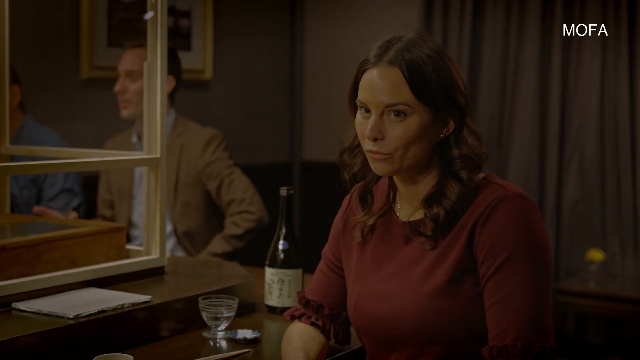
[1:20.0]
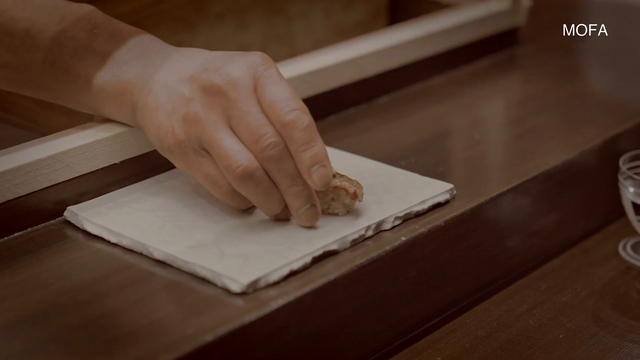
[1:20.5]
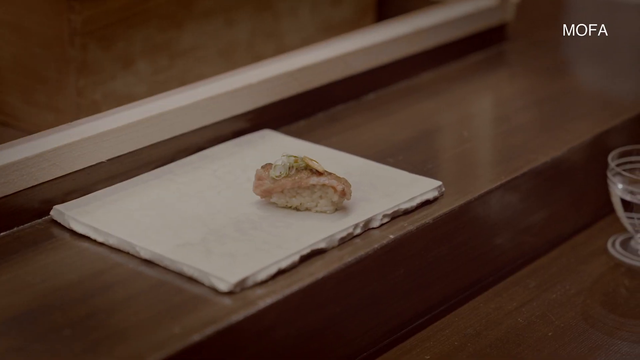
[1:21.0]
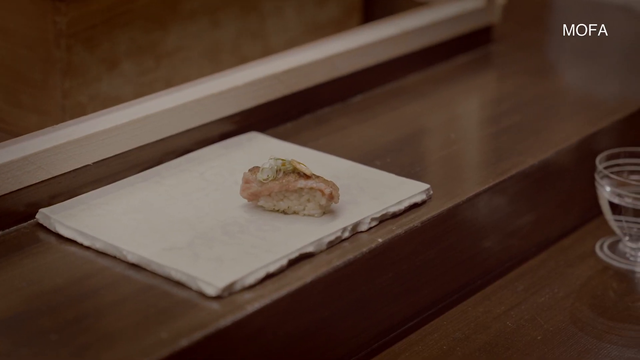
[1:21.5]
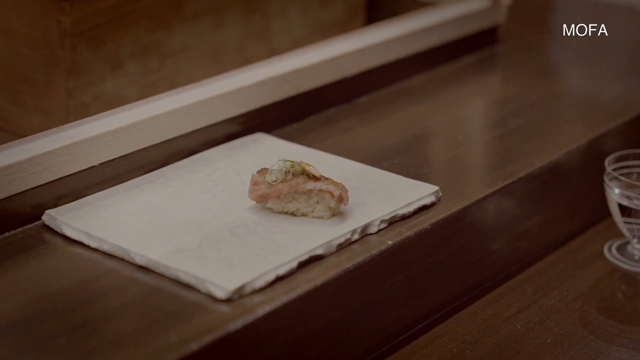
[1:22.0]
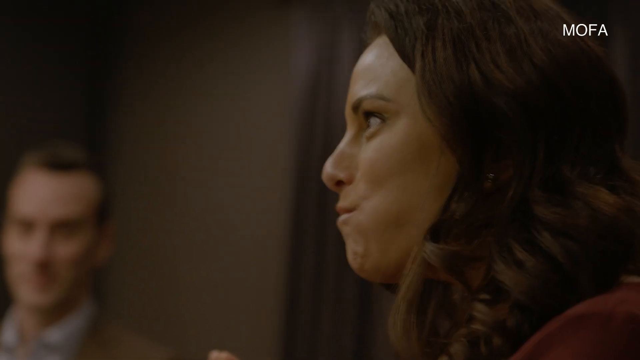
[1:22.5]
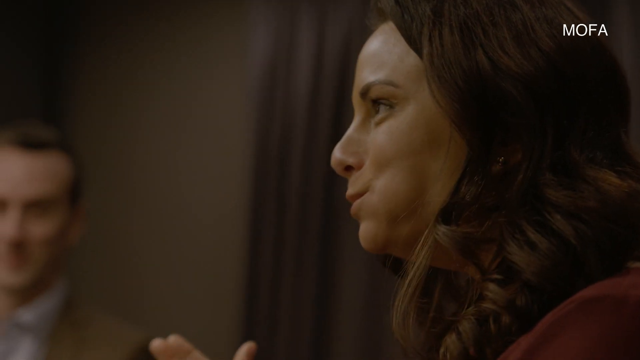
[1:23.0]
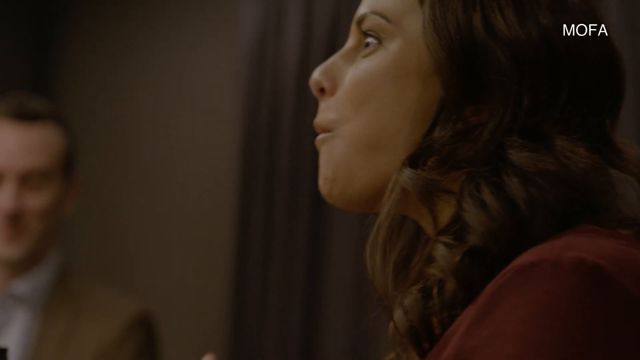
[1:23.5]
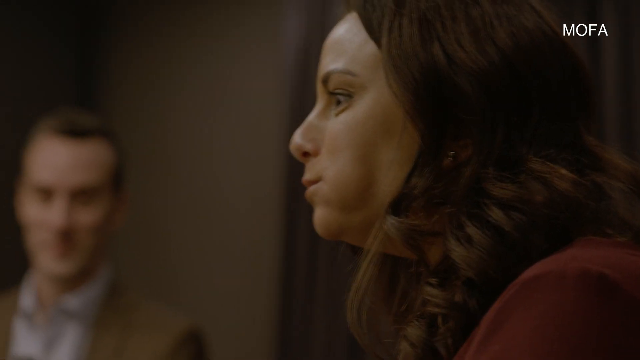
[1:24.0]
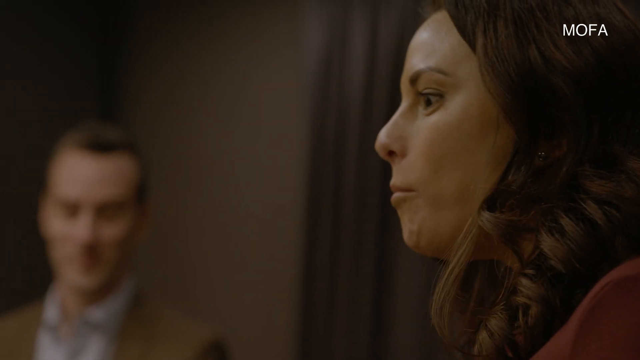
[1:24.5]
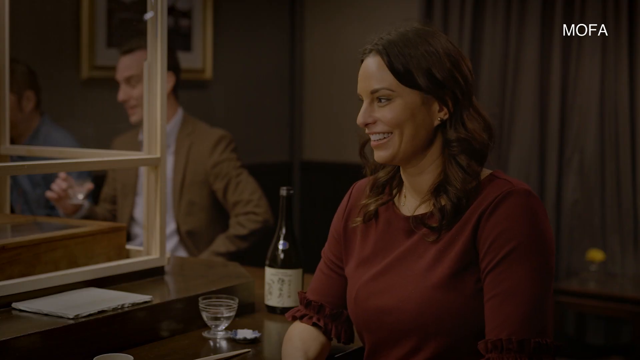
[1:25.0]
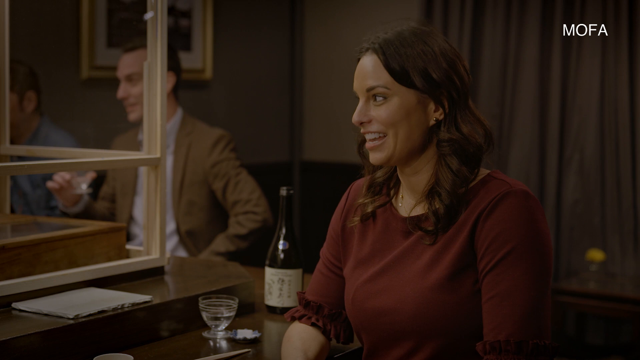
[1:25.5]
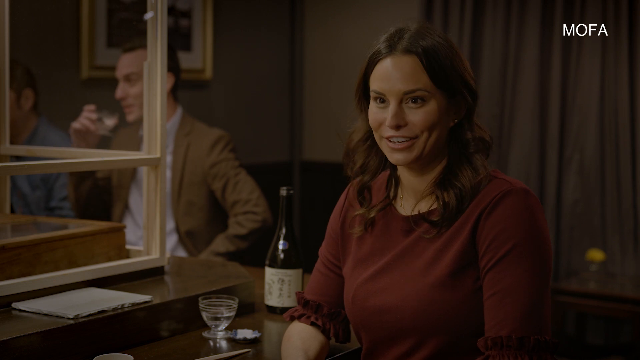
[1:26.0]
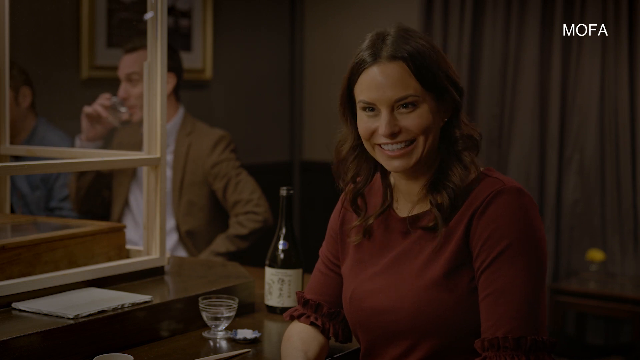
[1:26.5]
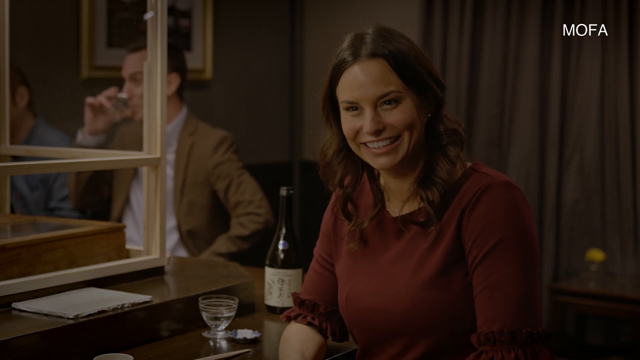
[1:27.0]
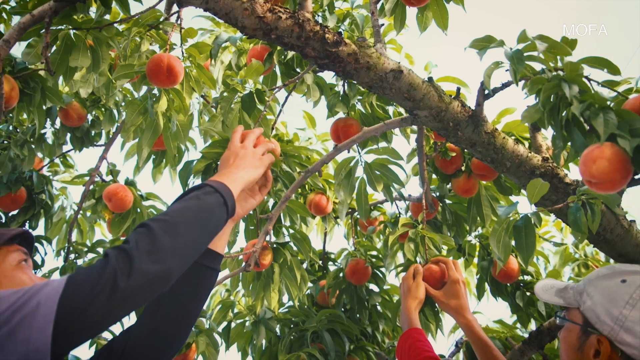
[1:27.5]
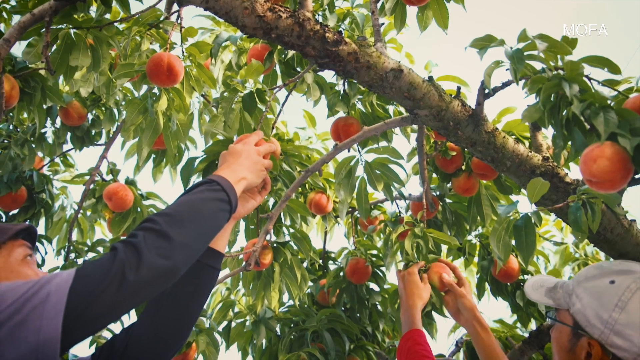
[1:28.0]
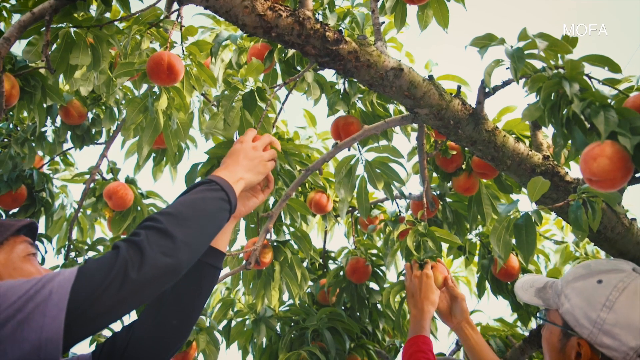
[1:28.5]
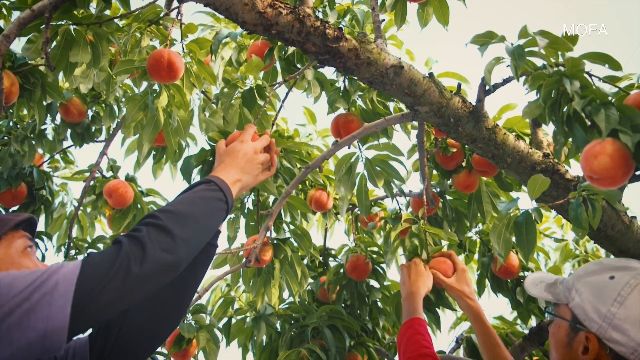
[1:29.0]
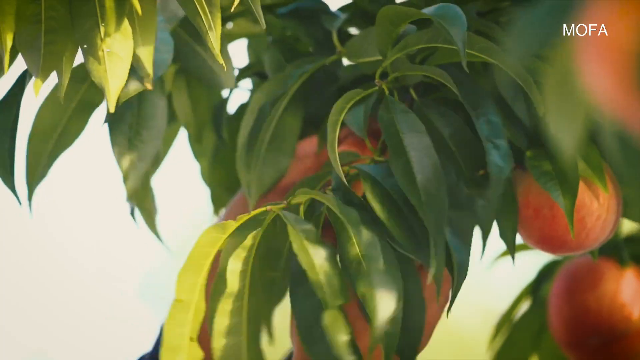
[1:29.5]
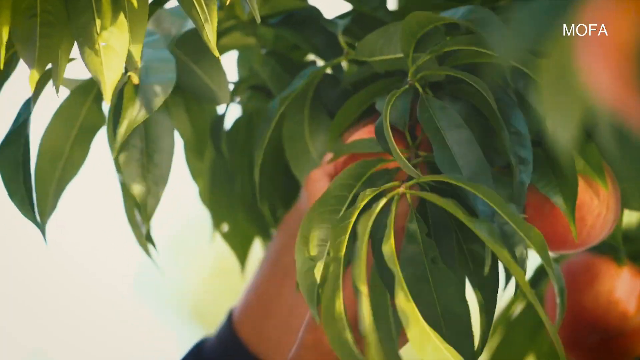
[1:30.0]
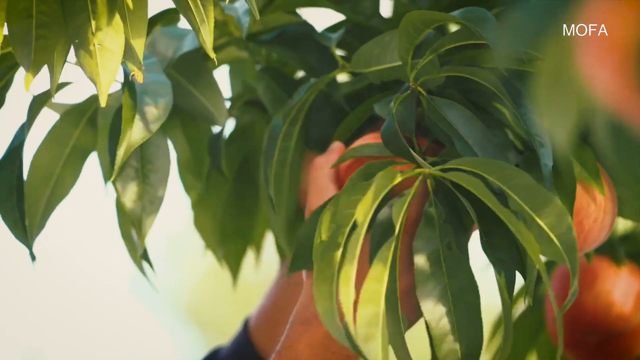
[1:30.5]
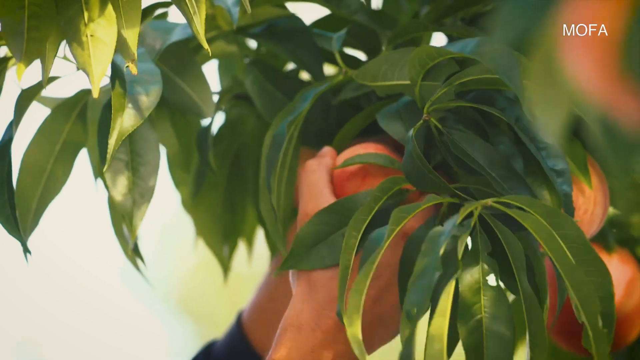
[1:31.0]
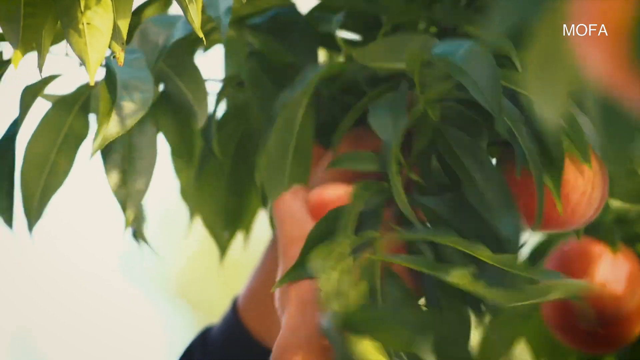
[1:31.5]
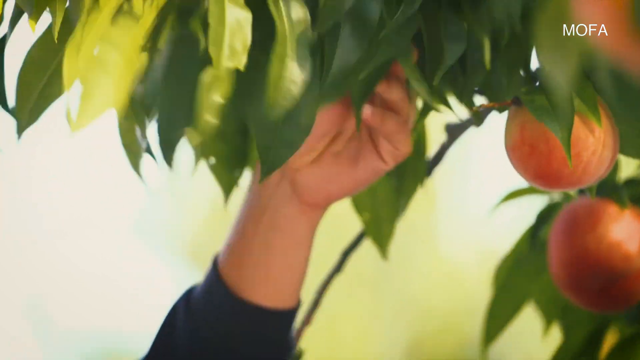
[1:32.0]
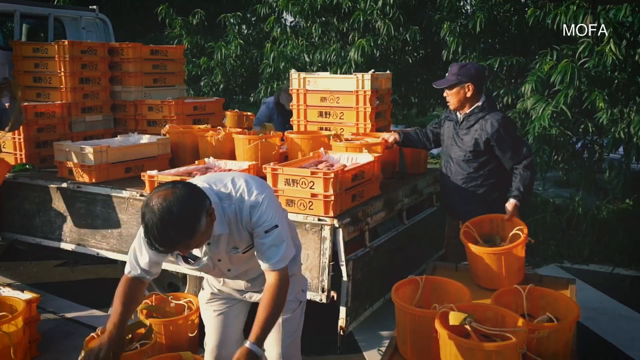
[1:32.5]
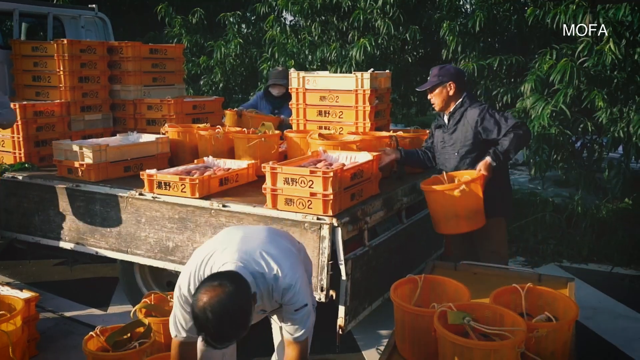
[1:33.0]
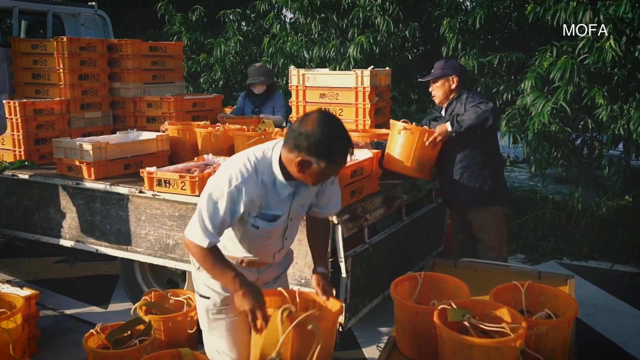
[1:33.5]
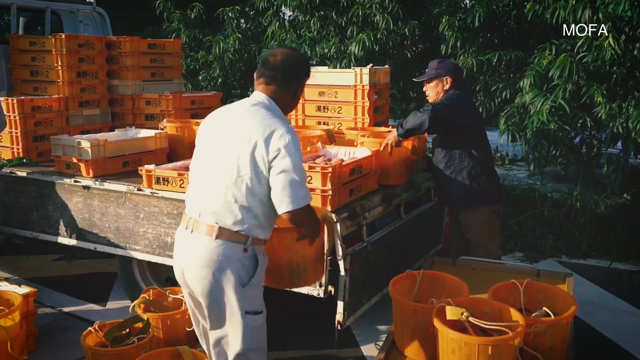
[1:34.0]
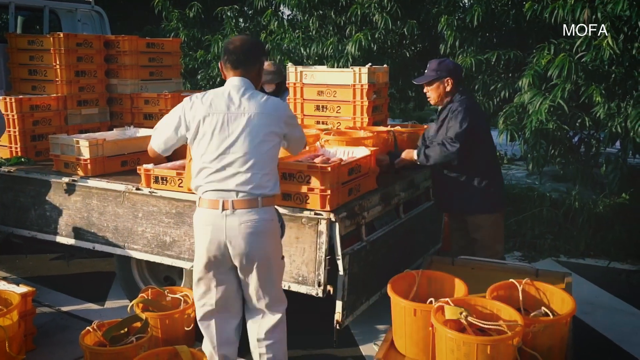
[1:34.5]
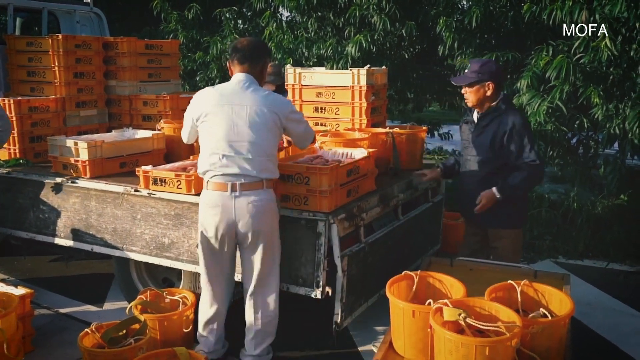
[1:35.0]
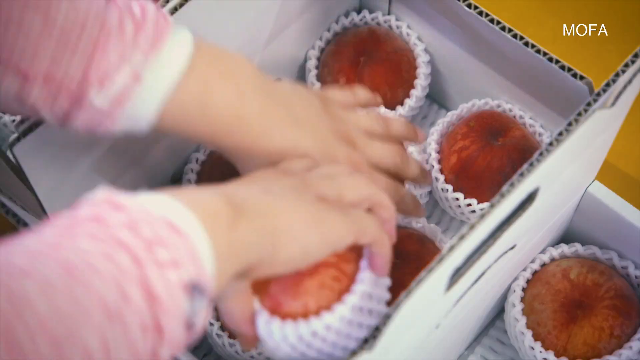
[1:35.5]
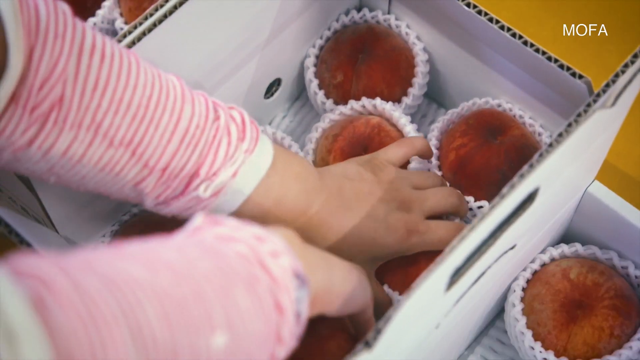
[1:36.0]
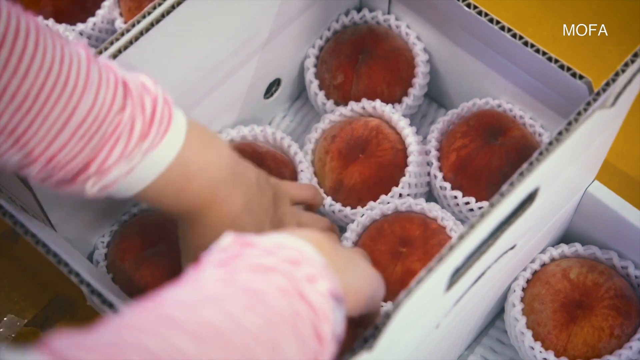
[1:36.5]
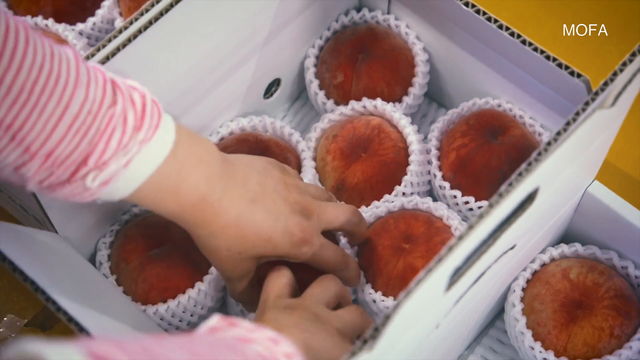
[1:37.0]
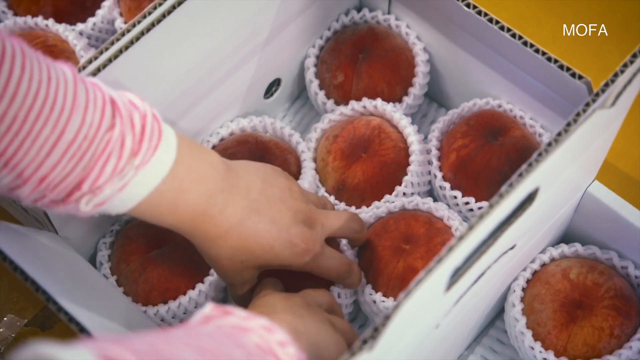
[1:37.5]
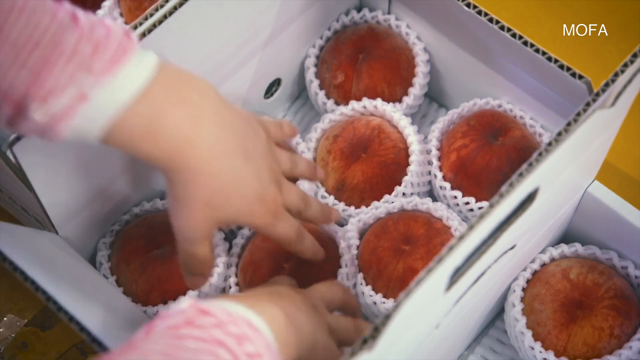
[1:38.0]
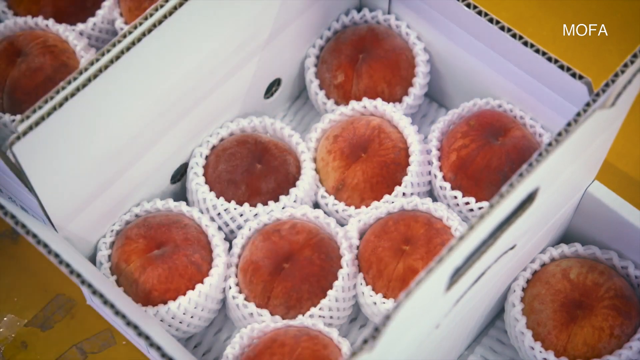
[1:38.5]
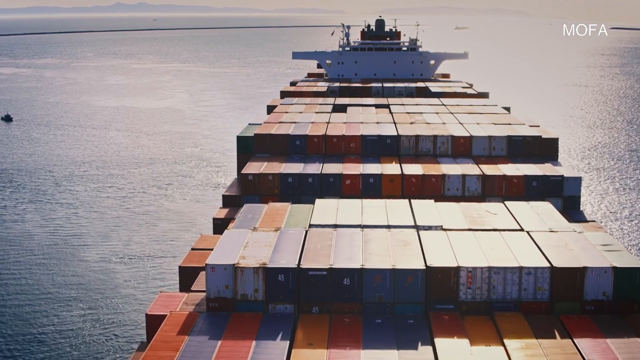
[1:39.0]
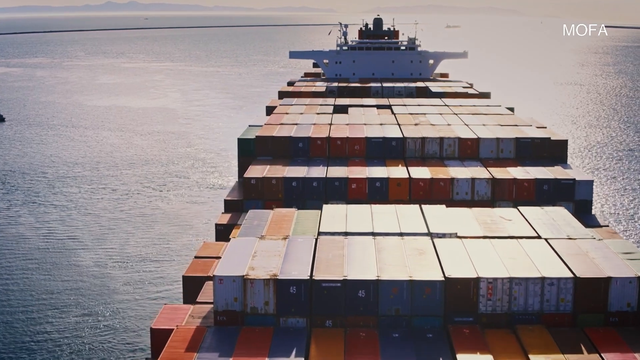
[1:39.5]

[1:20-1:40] A woman with brown hair and a red shirt has a napkin set down in front of her. Someone sets down a ball of rice topped with a piece of meat and some greenery for her to try. Her eyes are wide and she grins from ear to ear, happy with how it tastes. Next, a tree has plenty of fruit all over its branches, and workers reach up, grab the fruit and take it off the tree. People put the fruit into buckets and load it onto containers. Peaches are then put into some sort of wrap and packaged in a box.